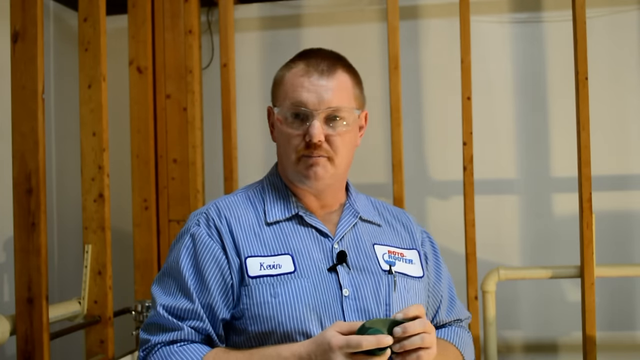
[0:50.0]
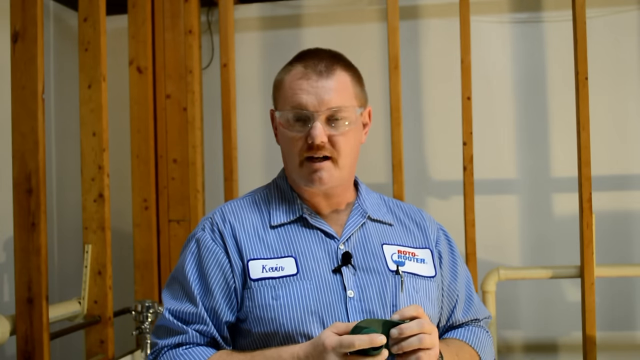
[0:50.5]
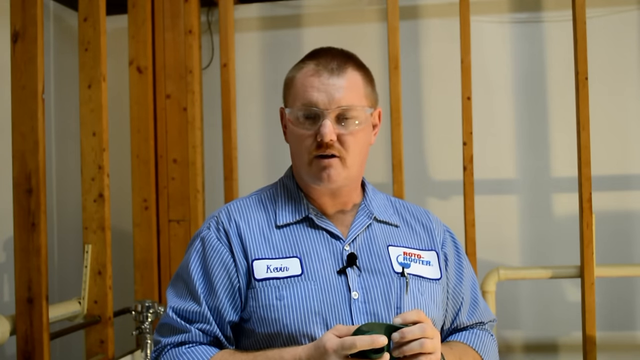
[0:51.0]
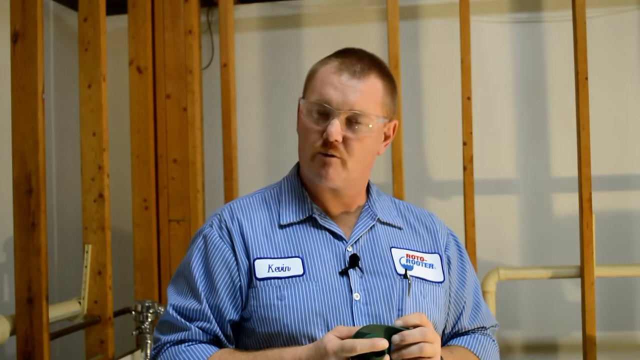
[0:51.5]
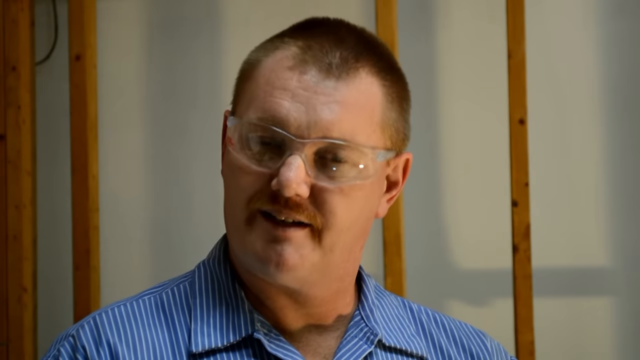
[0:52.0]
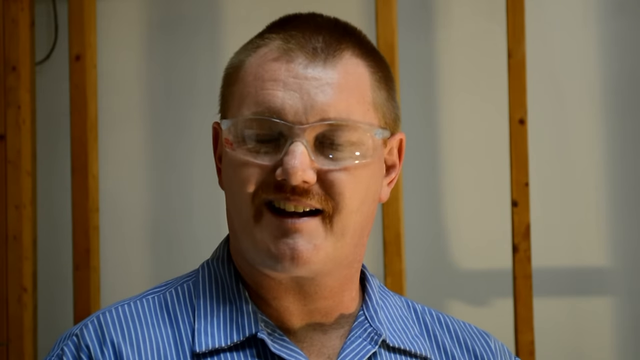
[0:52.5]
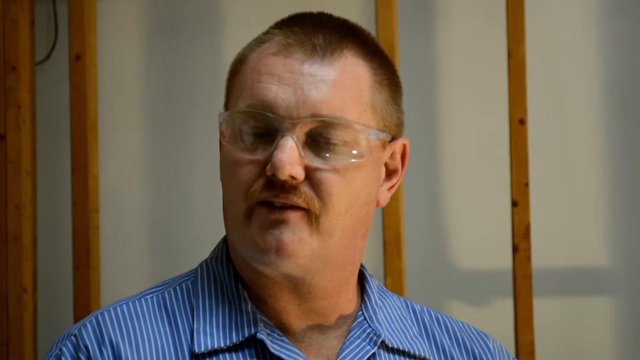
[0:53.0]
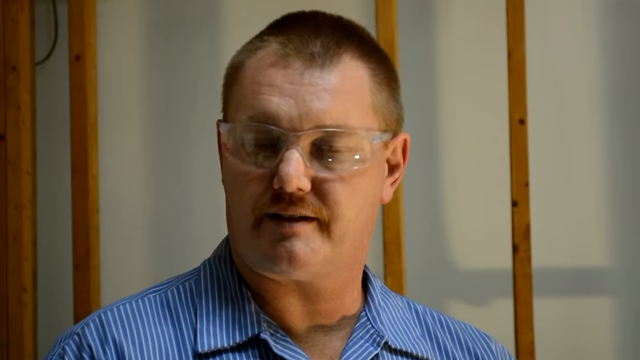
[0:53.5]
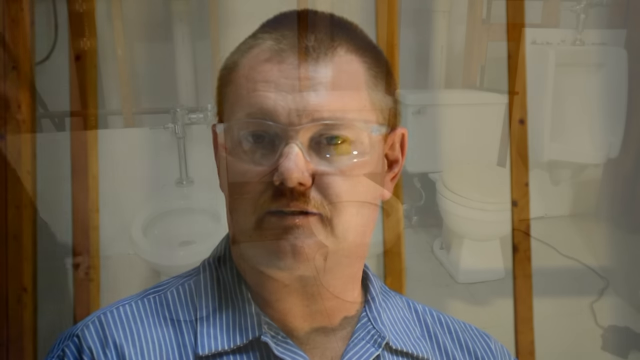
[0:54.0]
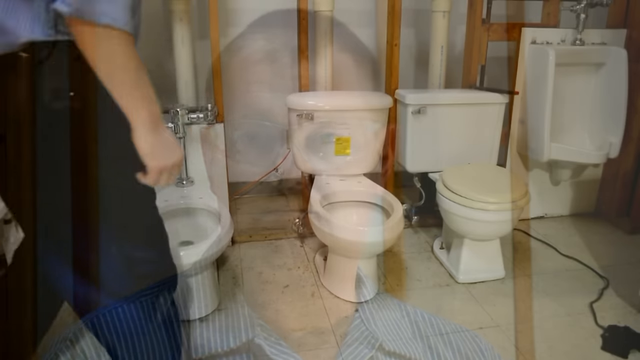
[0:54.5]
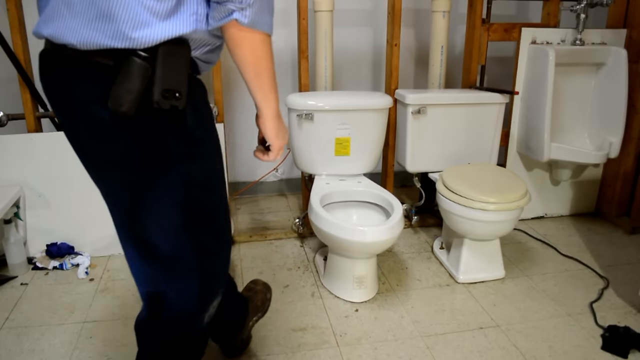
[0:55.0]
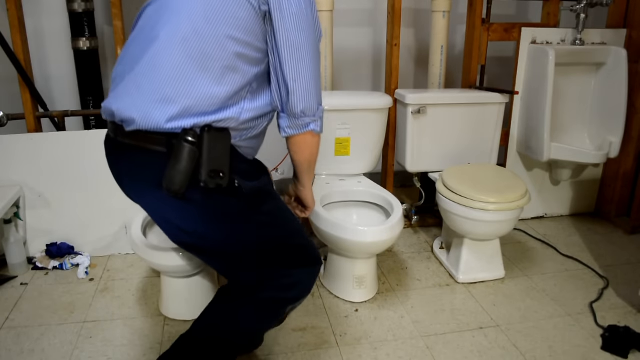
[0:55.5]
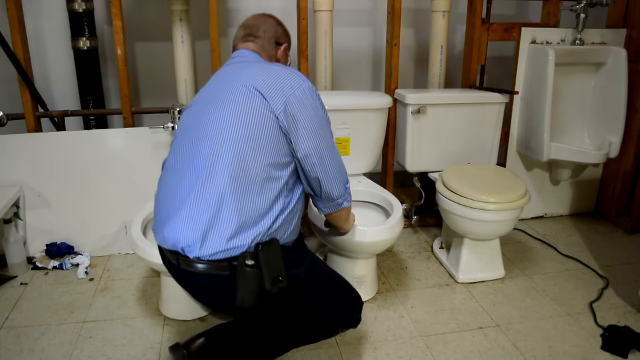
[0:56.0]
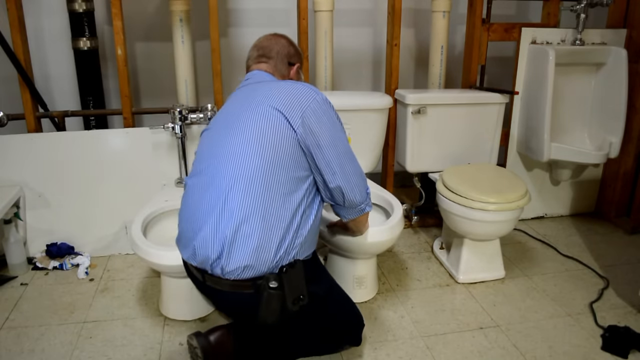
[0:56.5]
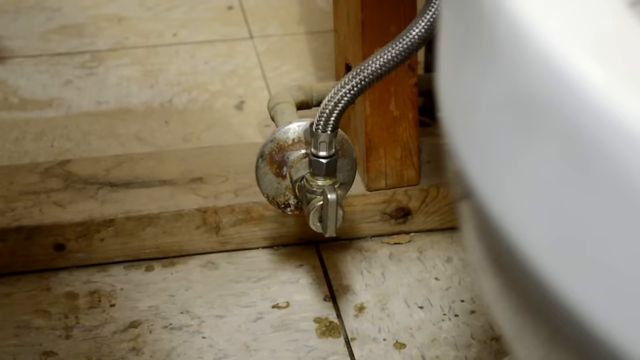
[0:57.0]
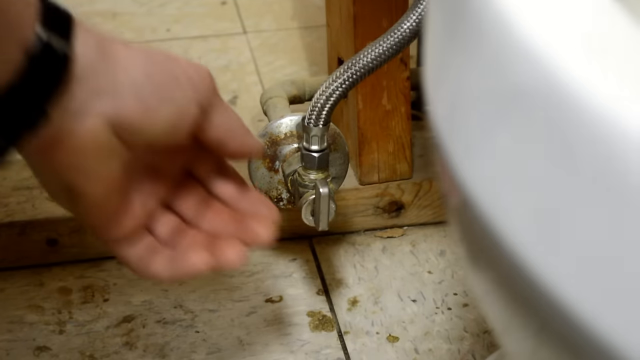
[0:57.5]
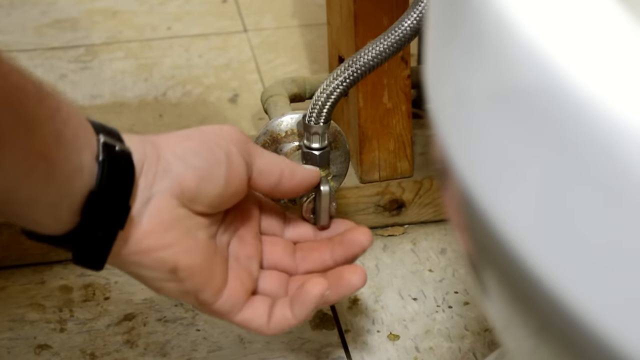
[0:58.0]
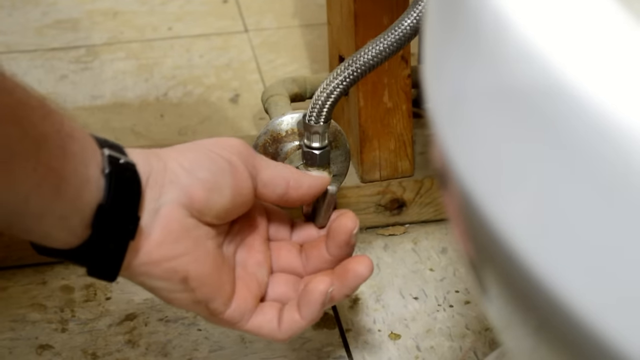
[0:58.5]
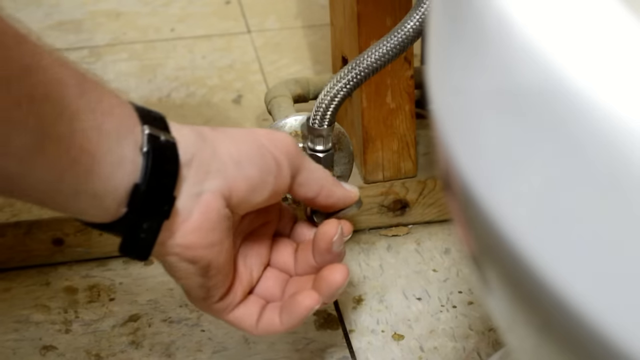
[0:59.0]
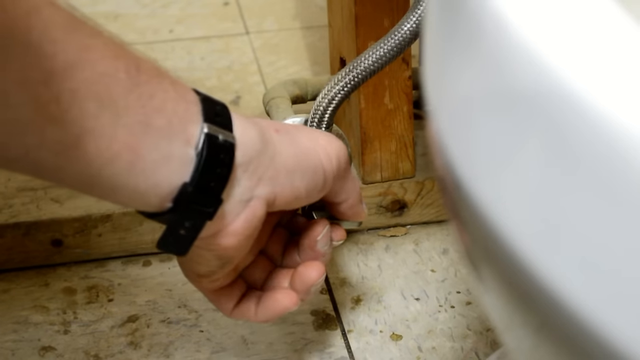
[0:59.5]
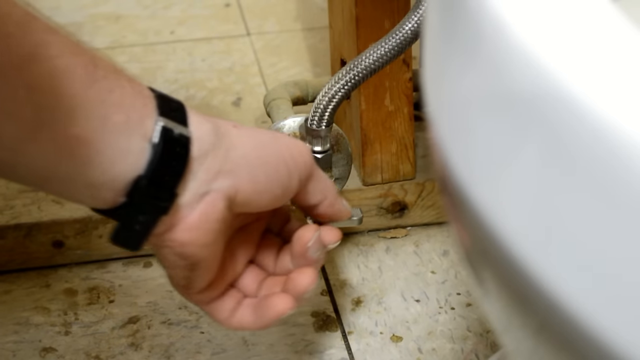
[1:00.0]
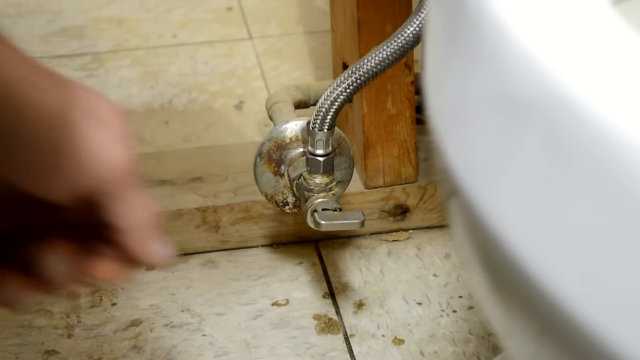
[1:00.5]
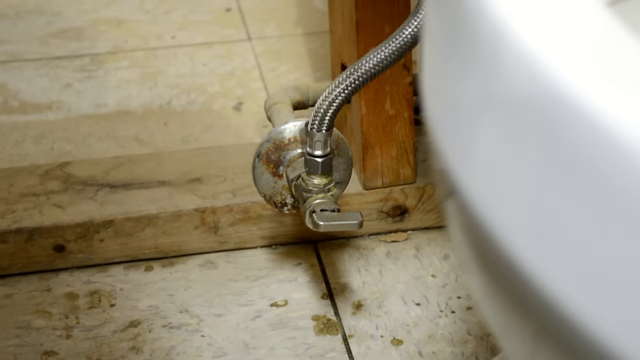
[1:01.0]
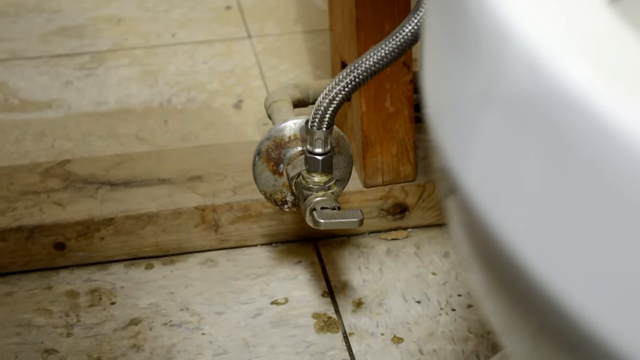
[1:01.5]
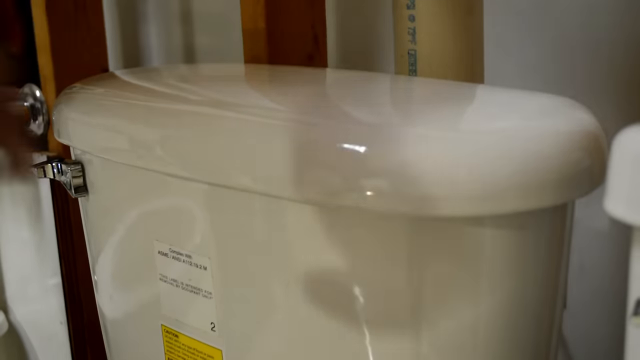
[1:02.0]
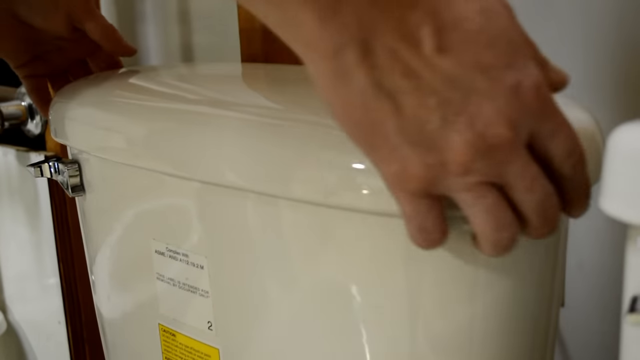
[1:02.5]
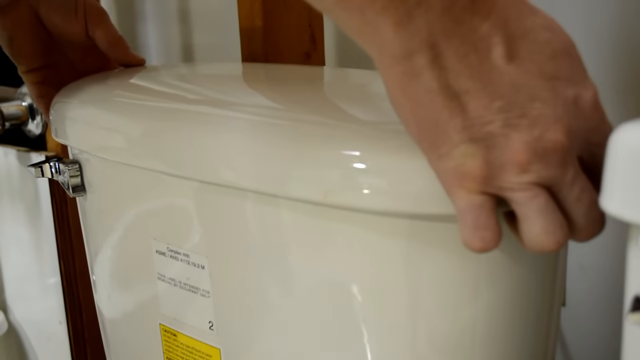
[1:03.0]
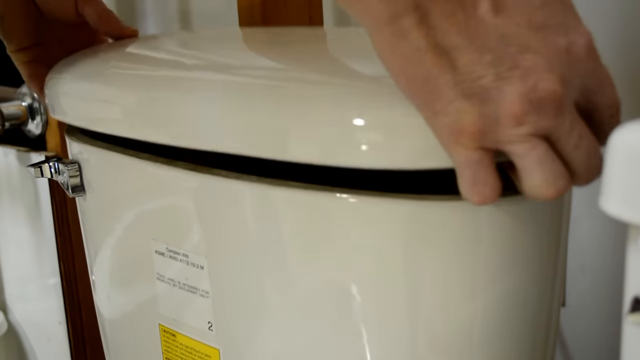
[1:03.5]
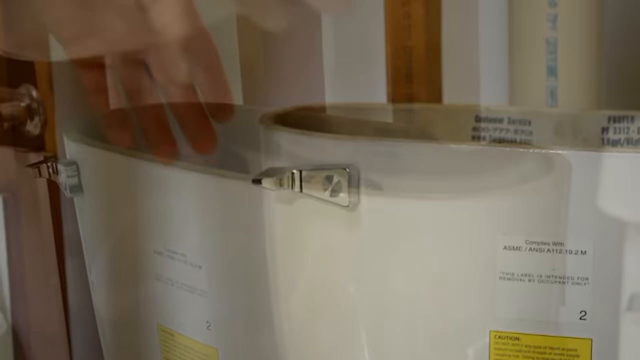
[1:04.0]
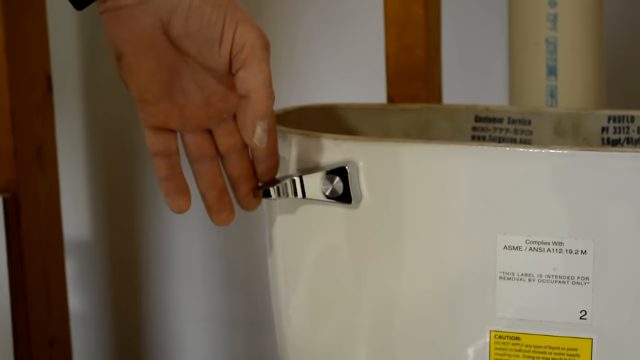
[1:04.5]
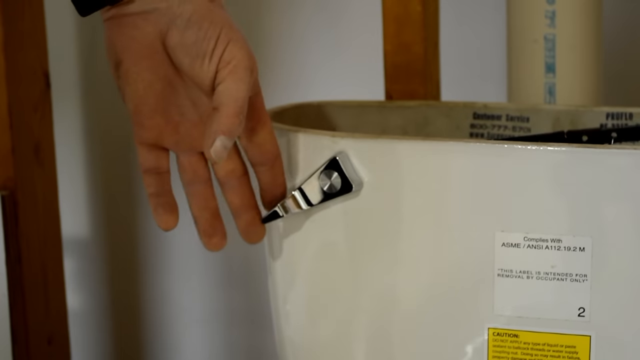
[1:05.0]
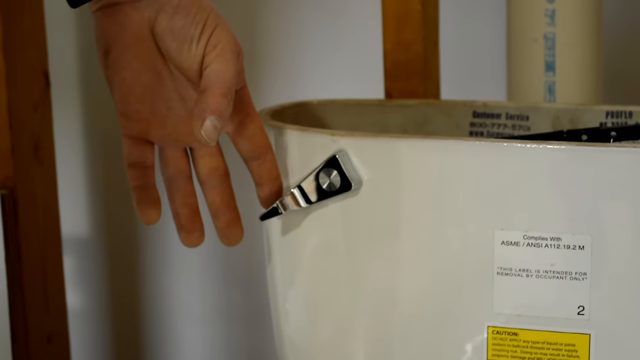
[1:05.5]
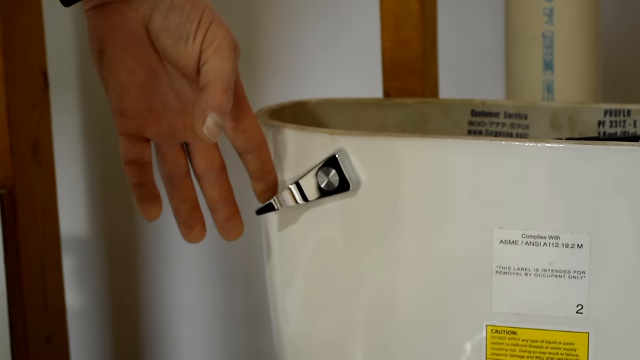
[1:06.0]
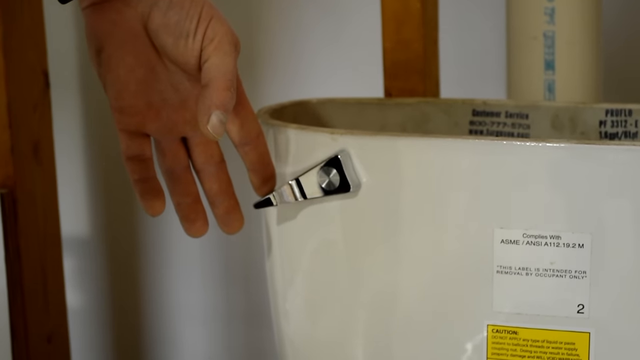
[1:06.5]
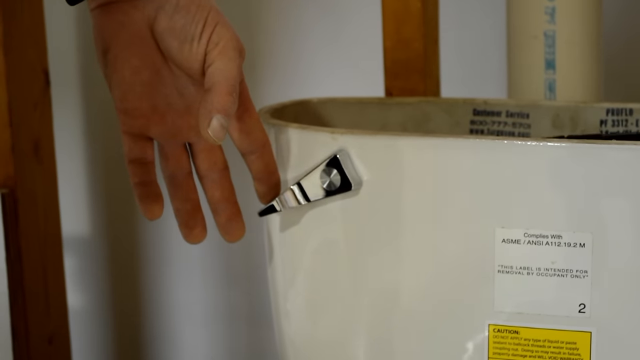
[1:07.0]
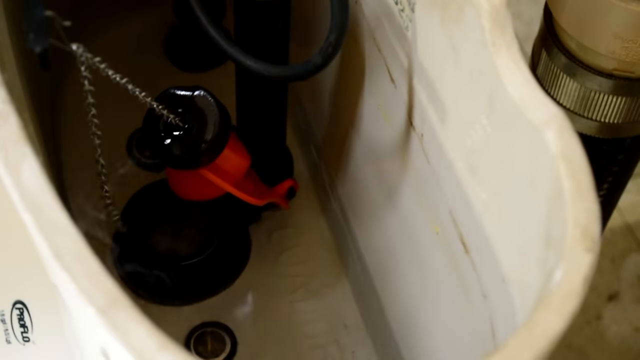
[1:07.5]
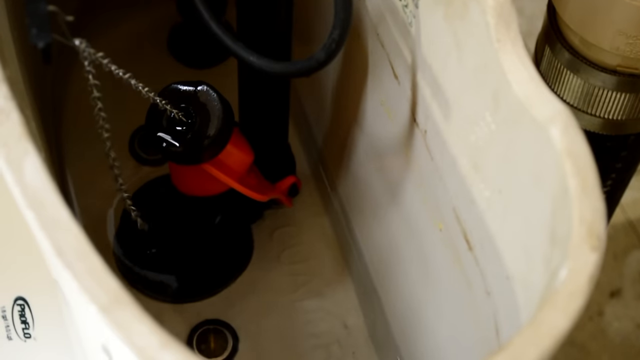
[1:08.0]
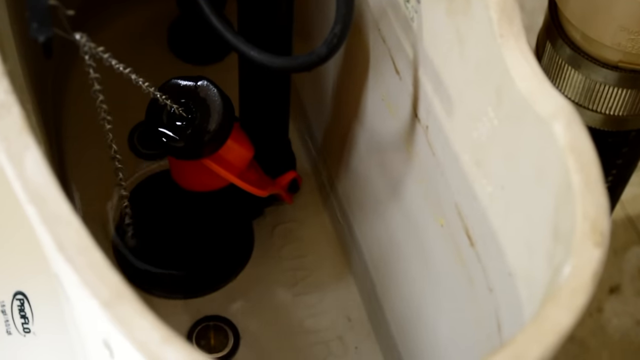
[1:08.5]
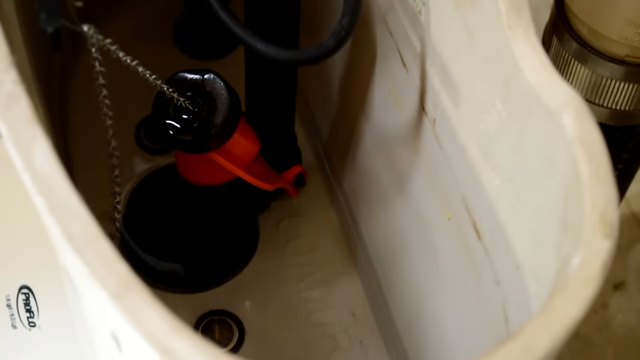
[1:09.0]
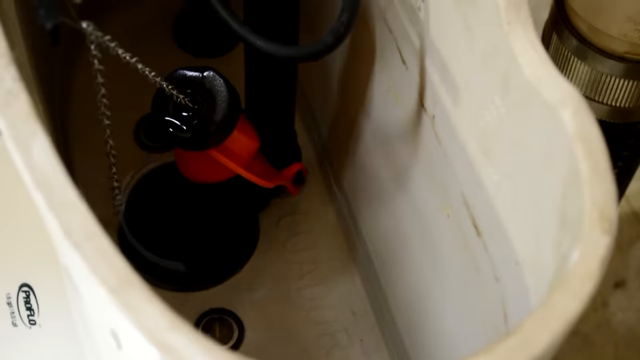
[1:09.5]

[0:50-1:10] The plumber talks to the camera, with a hood visible in the background. He holds something in his hand that he is playing with, an elastic thing like a seal. The camera focuses on the plumber, then cuts to different types of toilets, and the plumber goes to one of them to check its working condition. There is a toilet on the right and another three toilets. In the back, each toilet is connected to the pipe. The plumber flushes the toilet, the water level goes down, and the seal goes up.